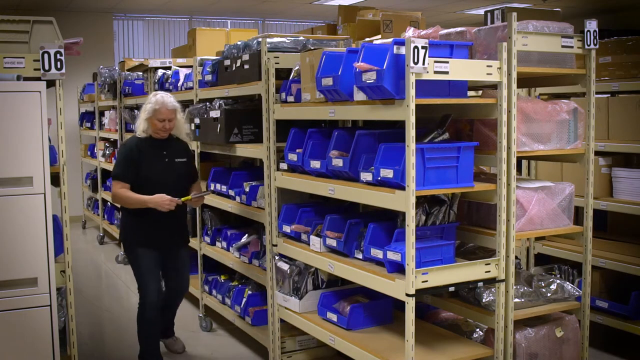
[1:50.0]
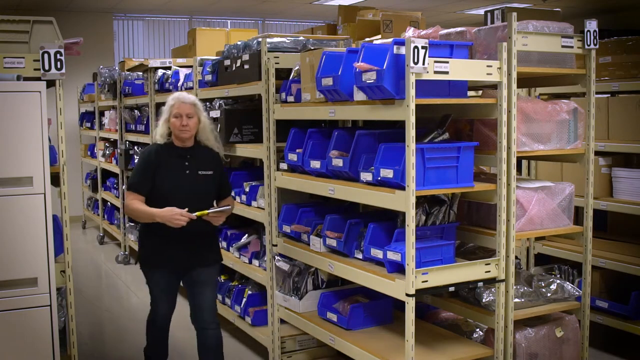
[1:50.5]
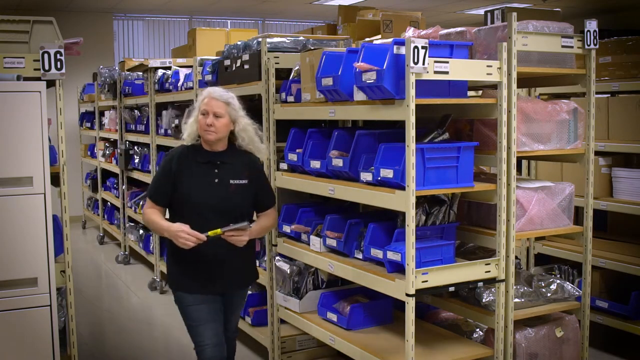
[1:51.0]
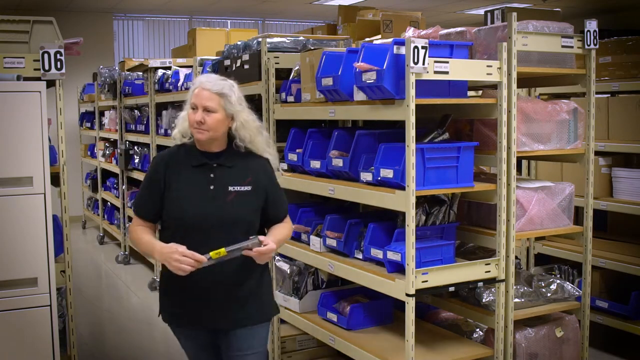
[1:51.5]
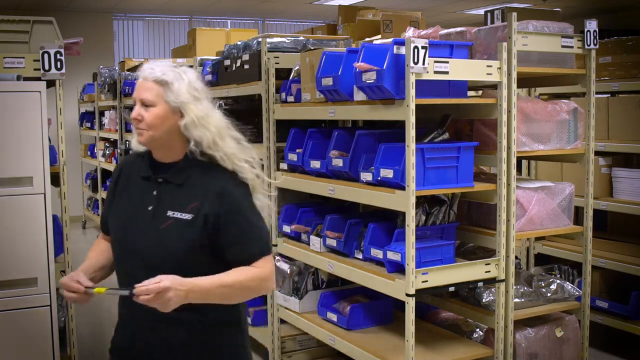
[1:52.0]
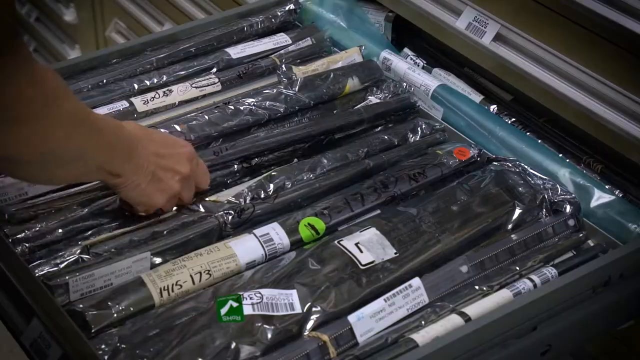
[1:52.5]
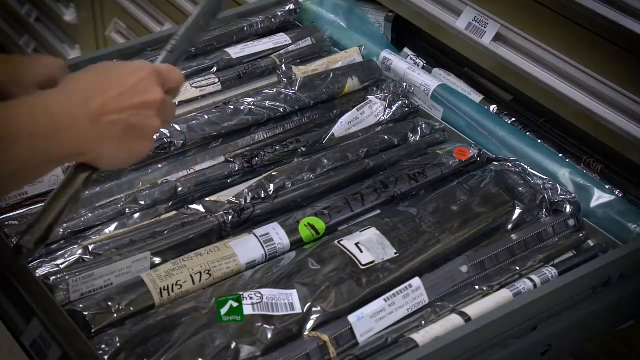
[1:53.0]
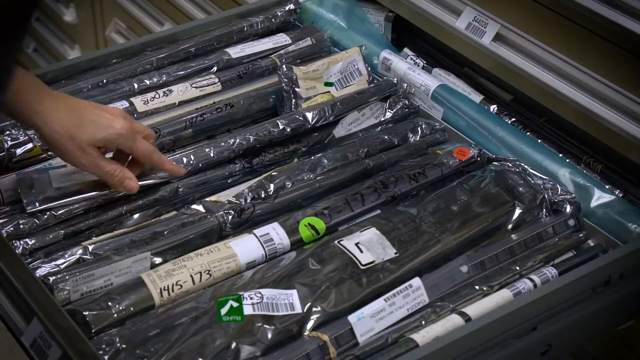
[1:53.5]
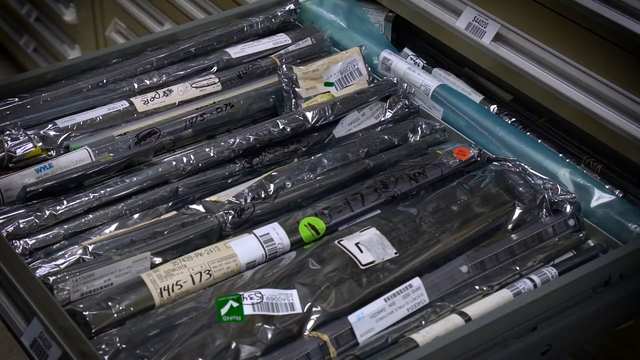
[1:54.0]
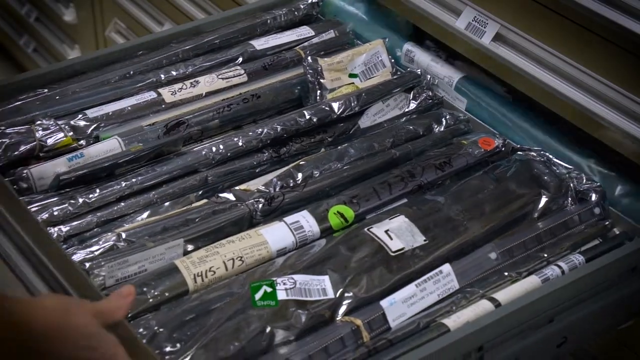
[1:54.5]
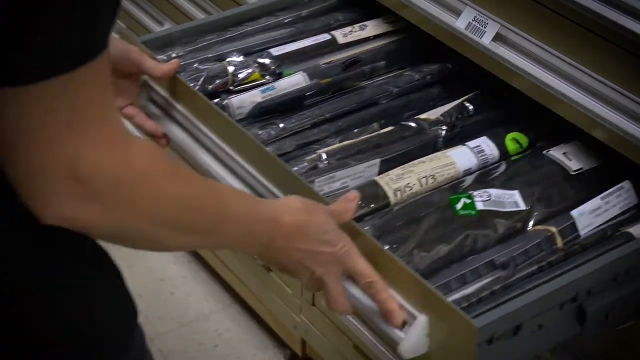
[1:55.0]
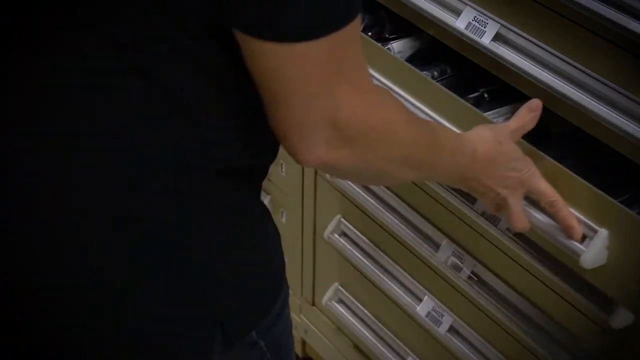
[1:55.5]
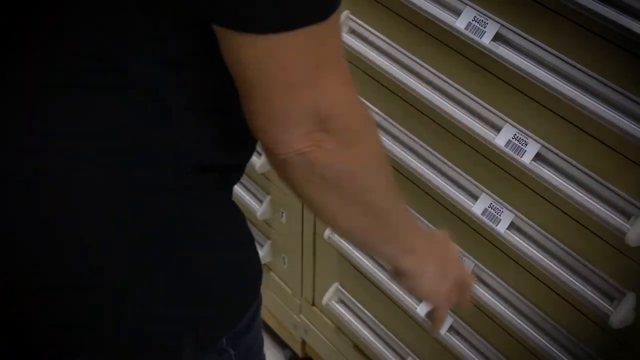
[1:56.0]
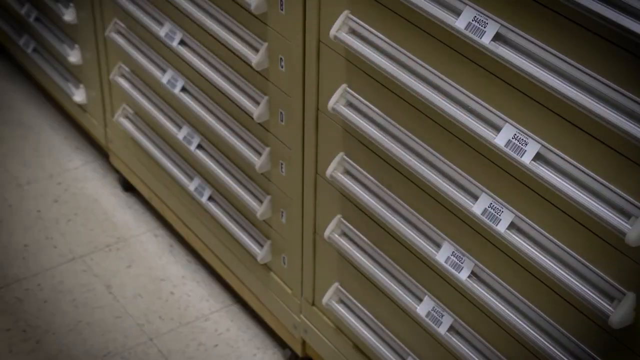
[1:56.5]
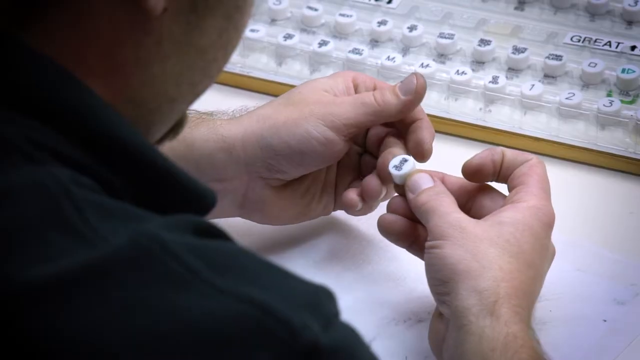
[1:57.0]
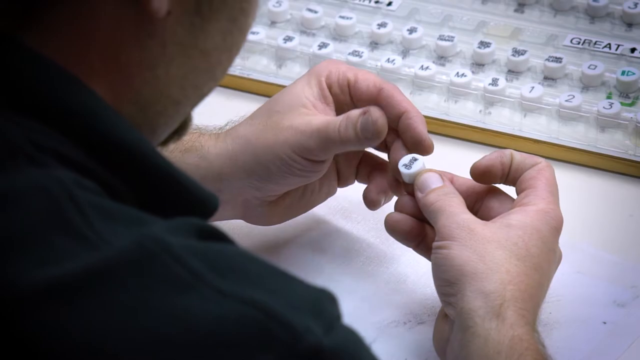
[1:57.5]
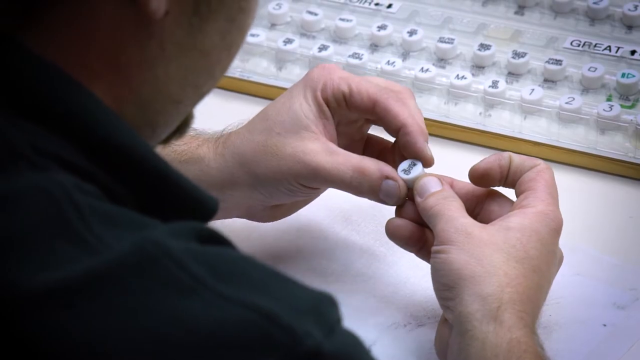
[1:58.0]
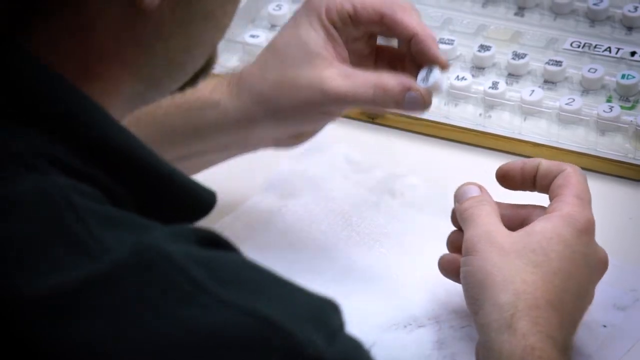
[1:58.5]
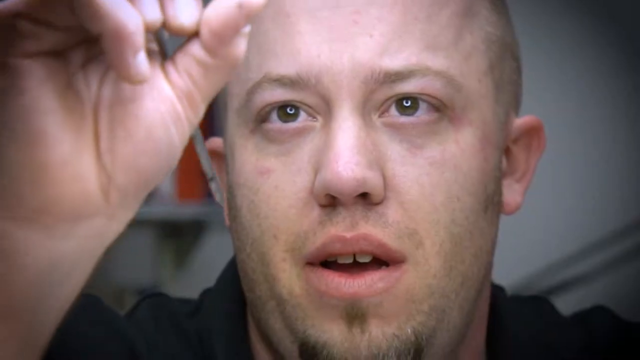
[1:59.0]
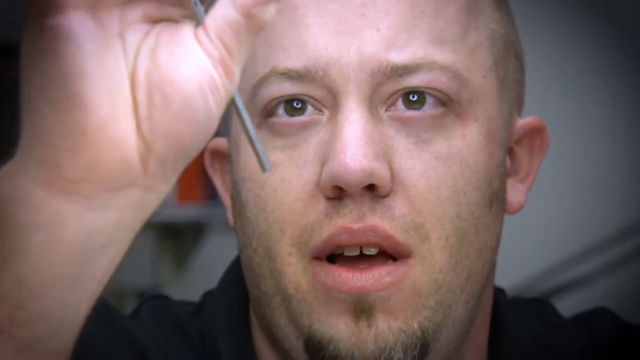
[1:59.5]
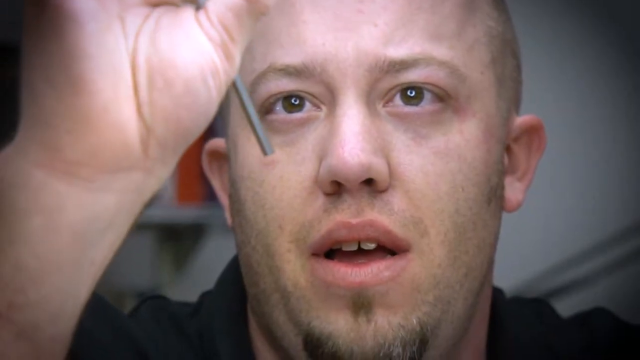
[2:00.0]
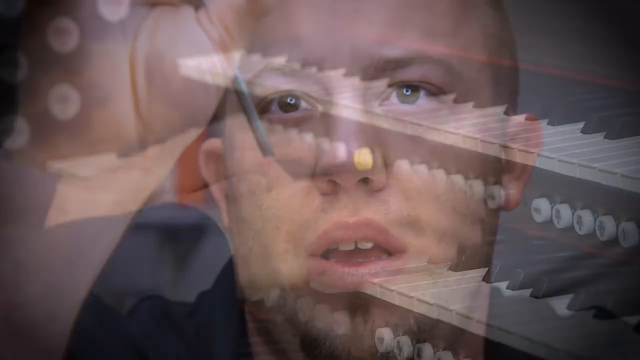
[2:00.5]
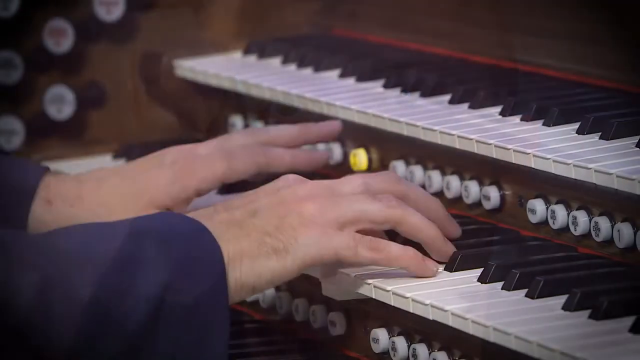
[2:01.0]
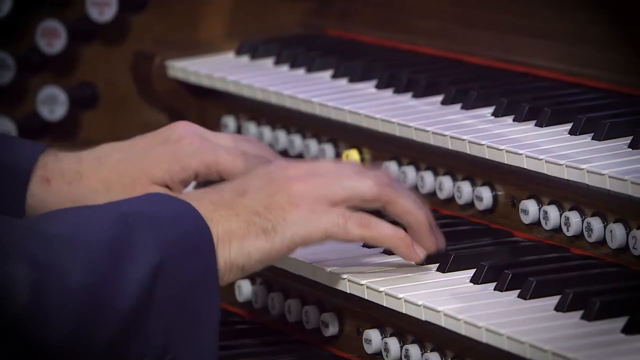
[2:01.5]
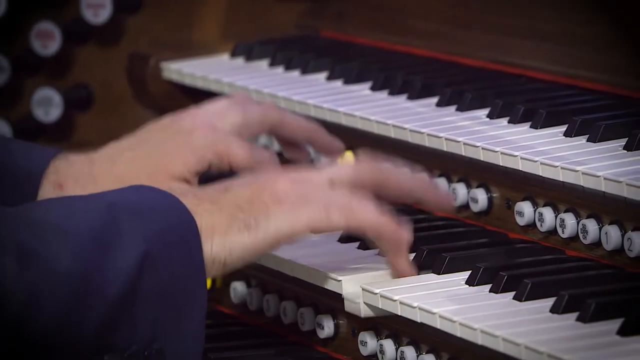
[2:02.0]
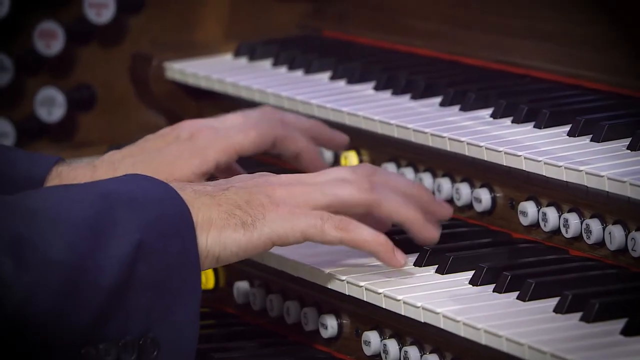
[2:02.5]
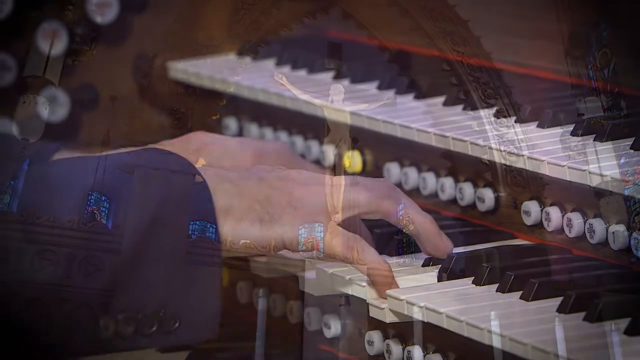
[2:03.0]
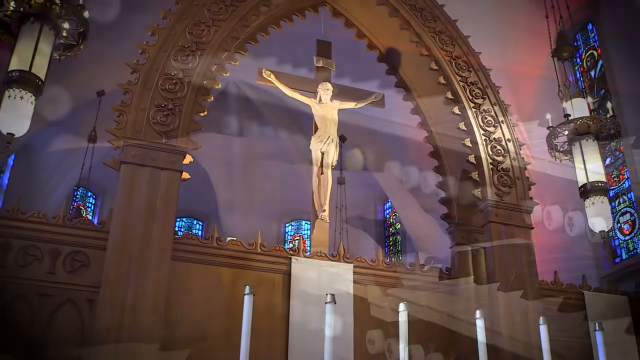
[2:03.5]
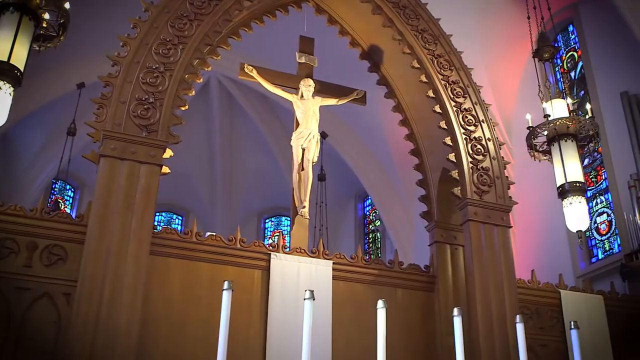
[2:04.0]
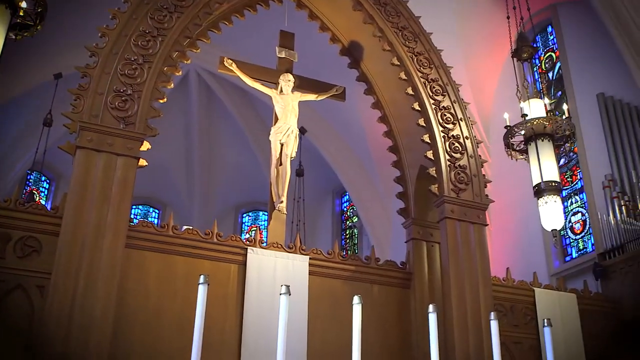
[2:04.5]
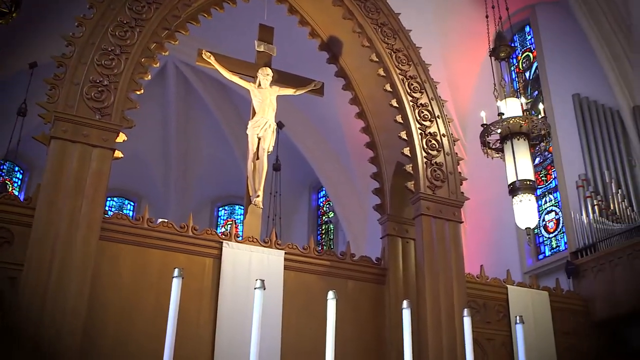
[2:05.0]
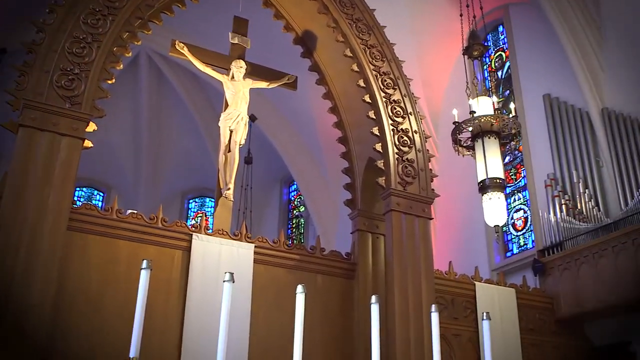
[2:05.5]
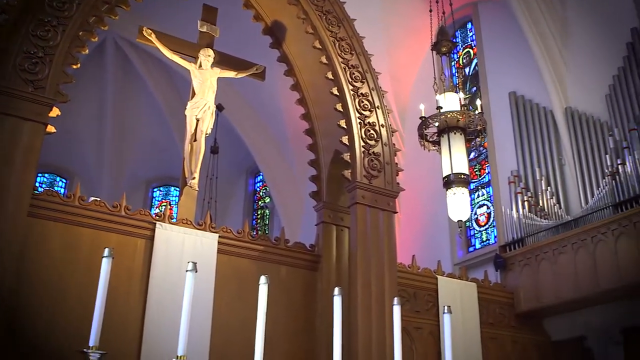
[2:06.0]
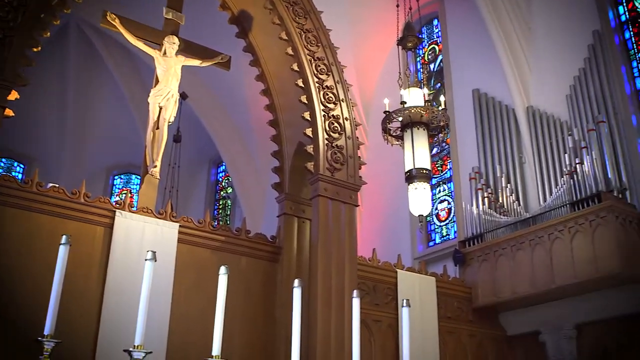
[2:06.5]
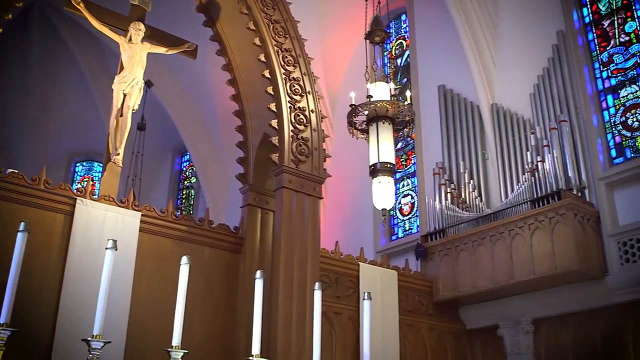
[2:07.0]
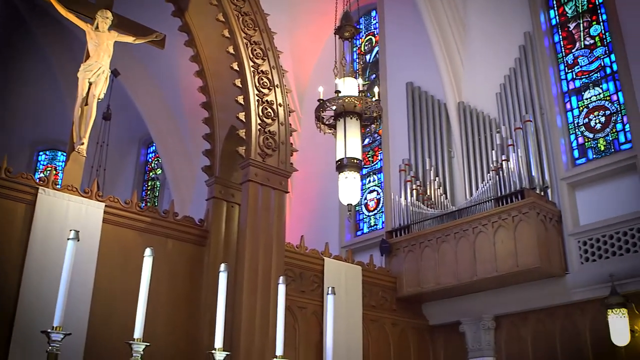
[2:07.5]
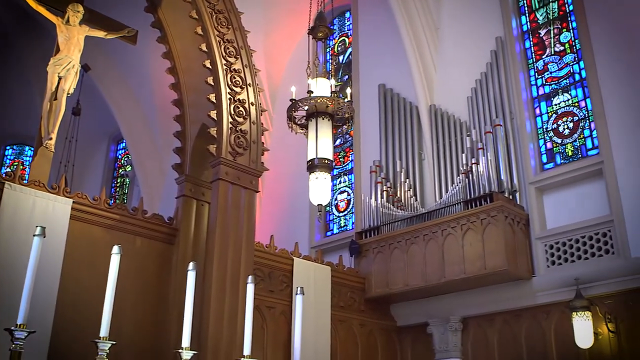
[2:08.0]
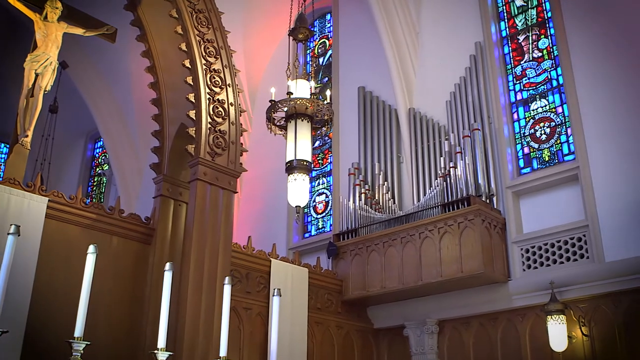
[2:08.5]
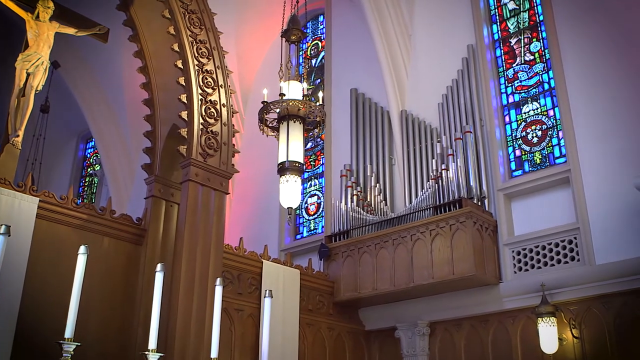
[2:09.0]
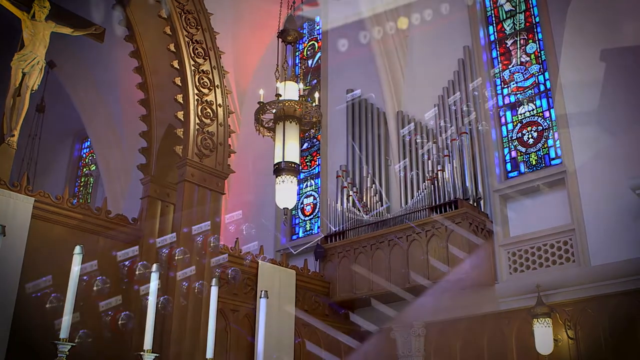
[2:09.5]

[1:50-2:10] A blonde woman in a black t-shirt walks in front of a row of blue bins, carrying something in her hands that she looks down at. As she approaches the camera, she moves to the left. Then a drawer is pulled out, containing various items, including long black sticks wrapped in plastic, and someone's hands ruffle through them. Next a man holds an organ stop in his two hands: a round white tab with writing on the top. He studies it, holds it up to the camera and looks. An organ is played with both hands on the lower keyboard. The camera then switches to the inside of a church, where a large crucifix in the center is below a golden arch. Beside it are long stained glass panels, with long organ pipes between them.